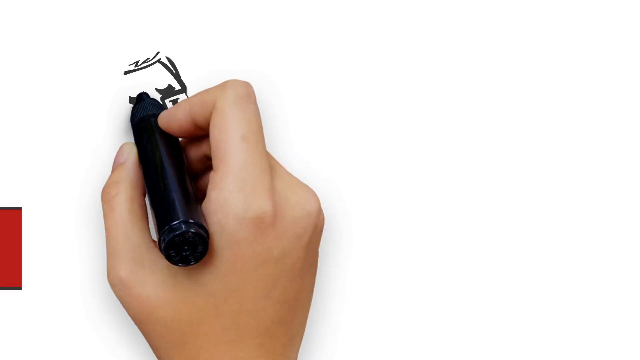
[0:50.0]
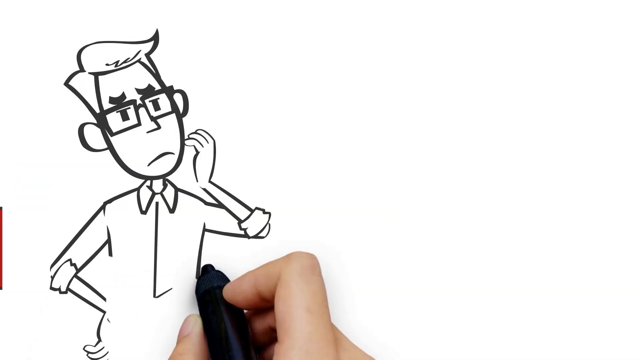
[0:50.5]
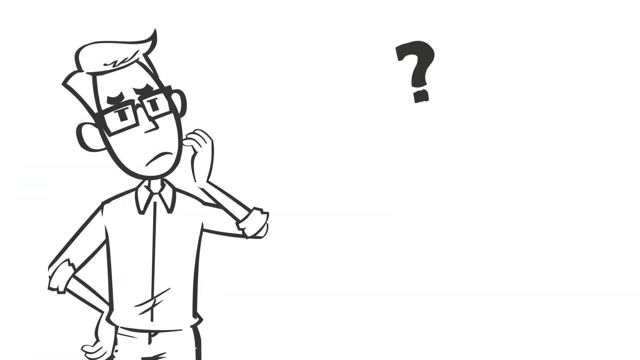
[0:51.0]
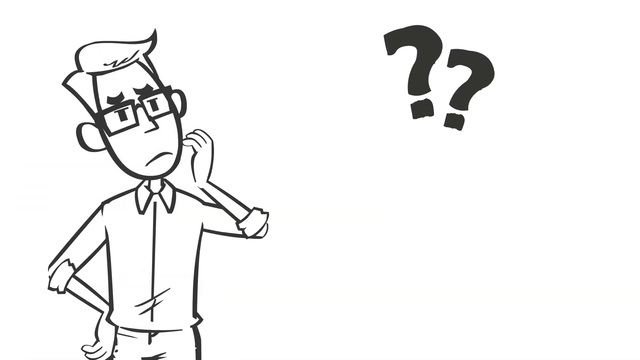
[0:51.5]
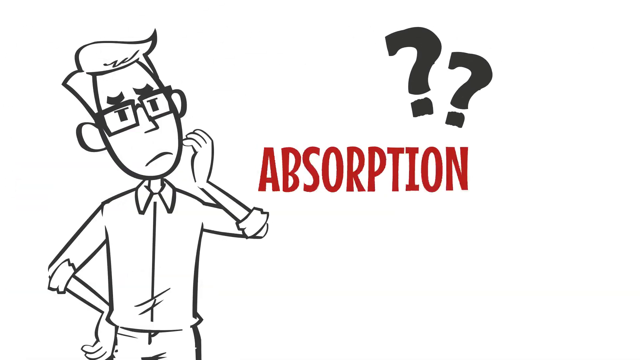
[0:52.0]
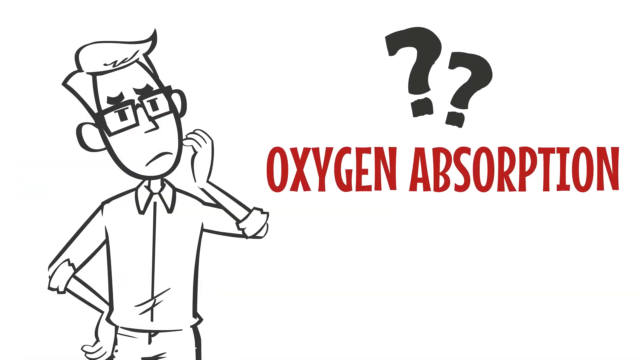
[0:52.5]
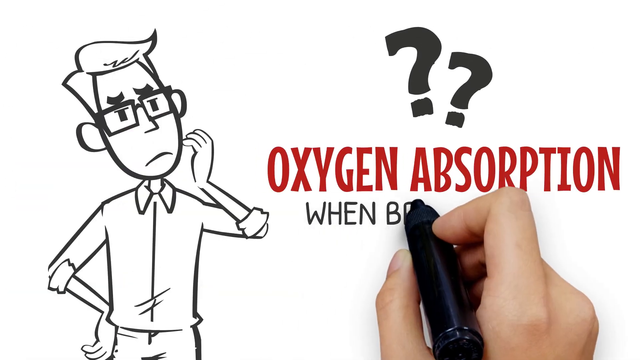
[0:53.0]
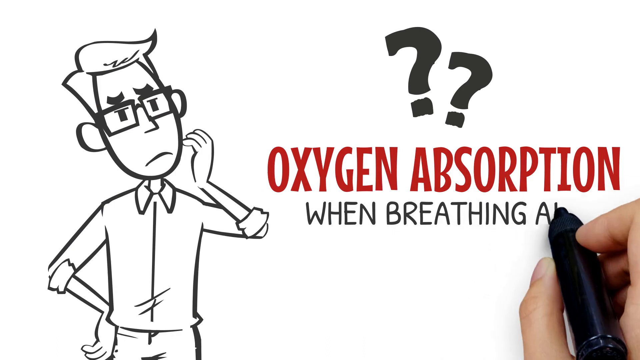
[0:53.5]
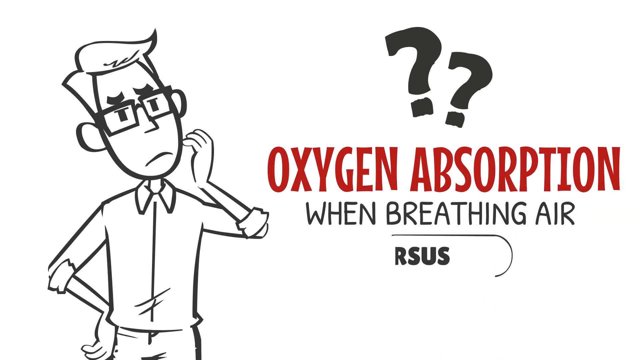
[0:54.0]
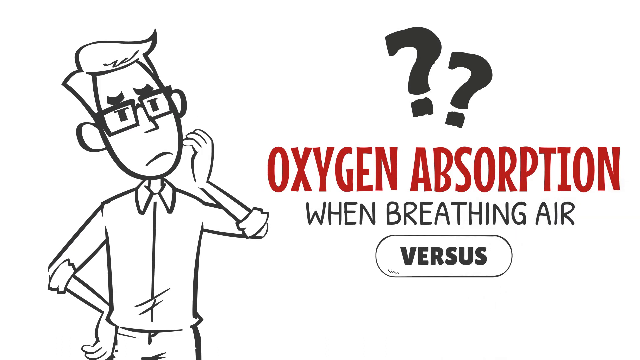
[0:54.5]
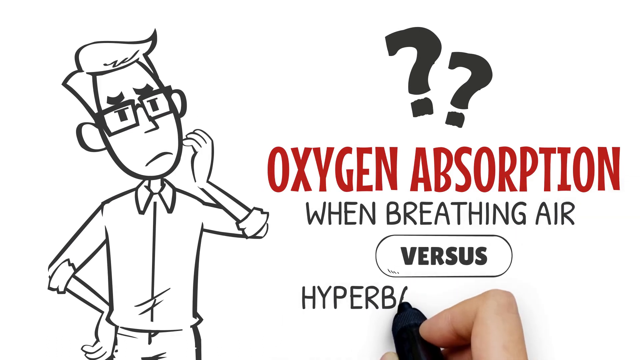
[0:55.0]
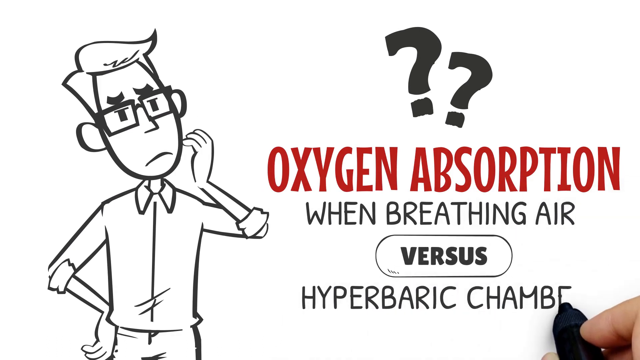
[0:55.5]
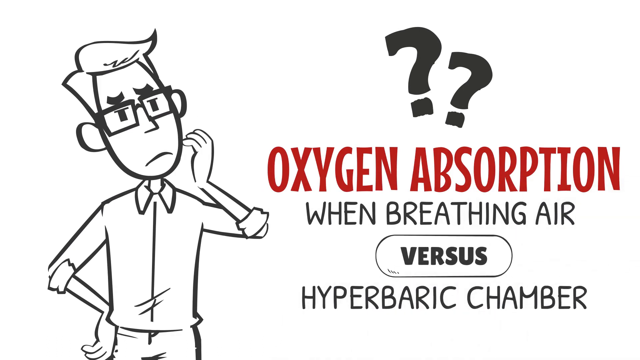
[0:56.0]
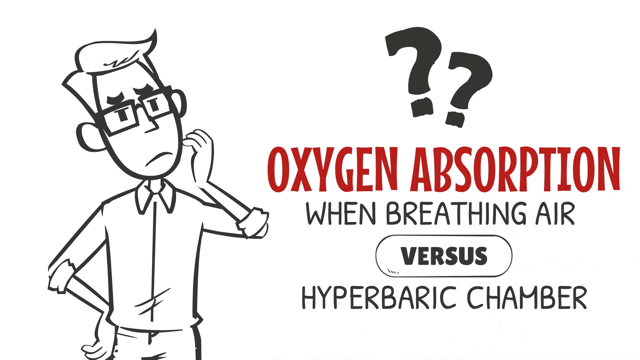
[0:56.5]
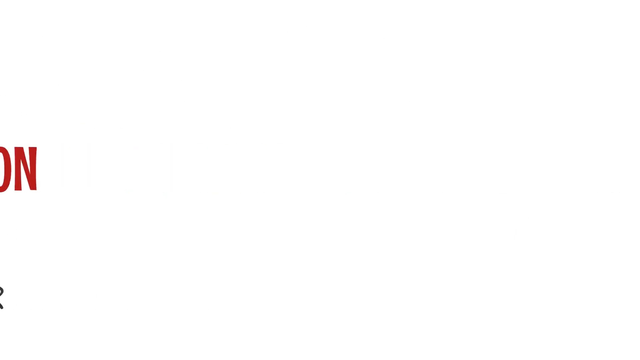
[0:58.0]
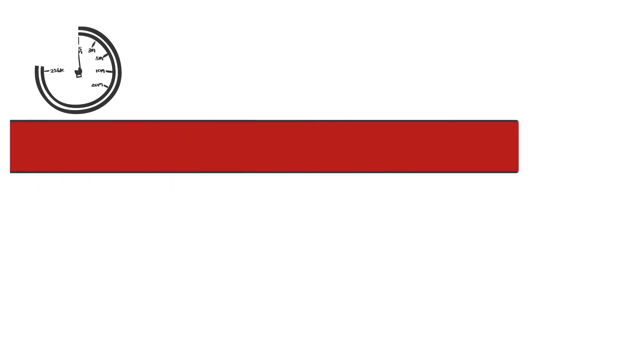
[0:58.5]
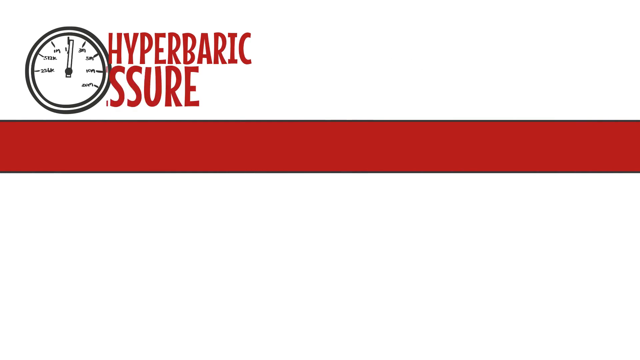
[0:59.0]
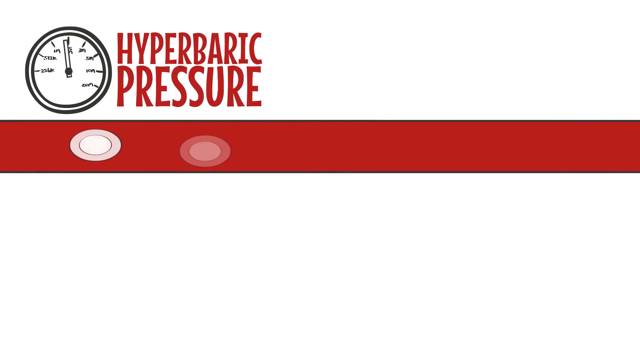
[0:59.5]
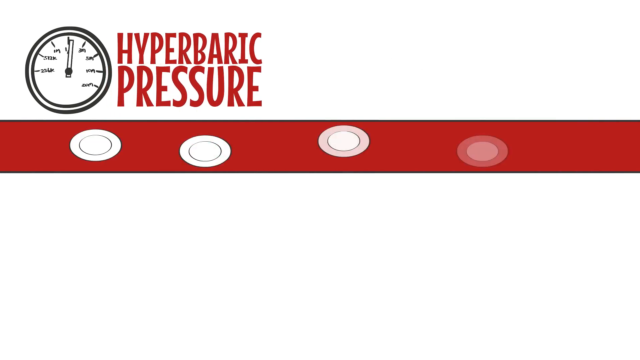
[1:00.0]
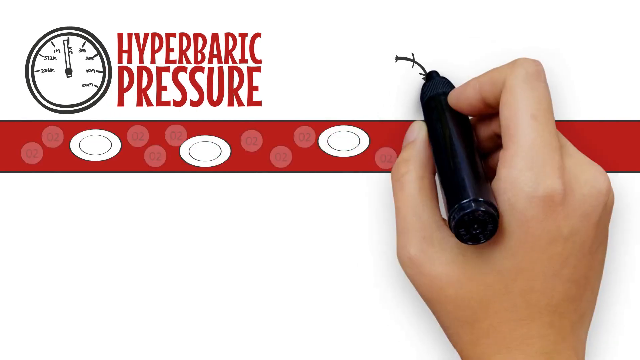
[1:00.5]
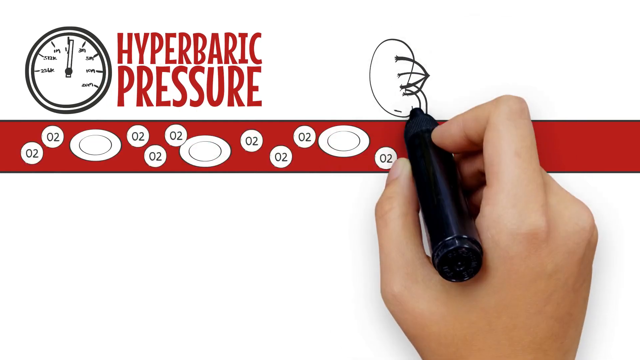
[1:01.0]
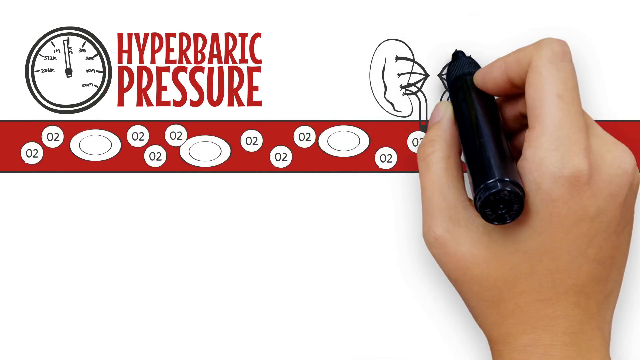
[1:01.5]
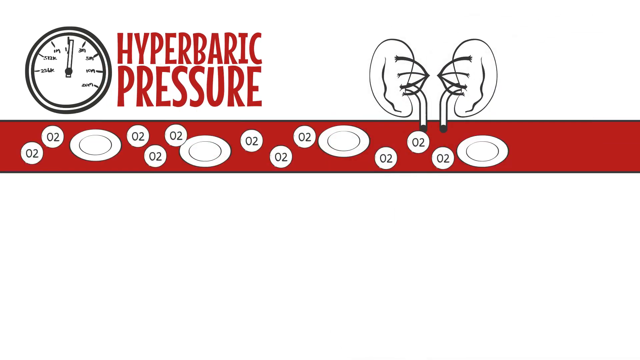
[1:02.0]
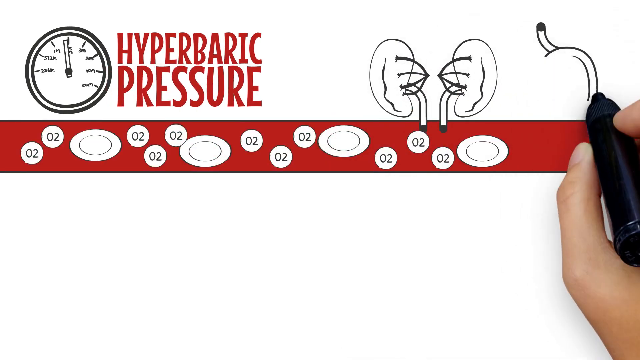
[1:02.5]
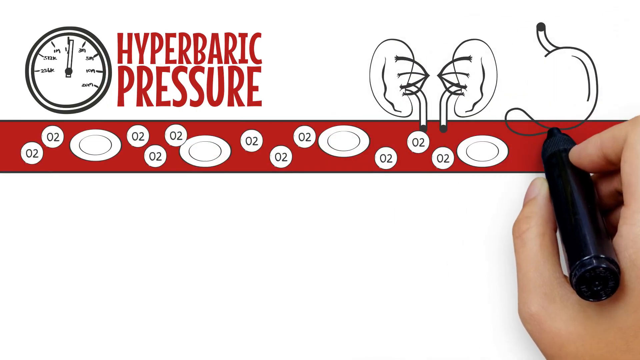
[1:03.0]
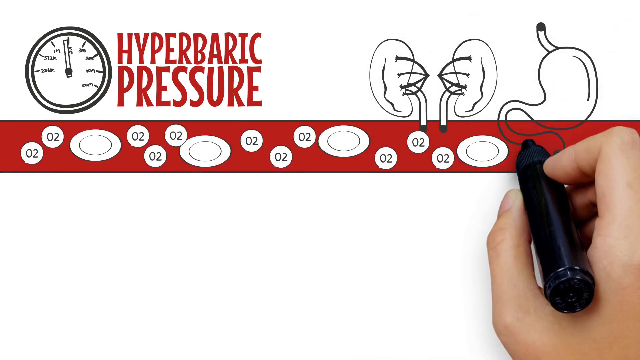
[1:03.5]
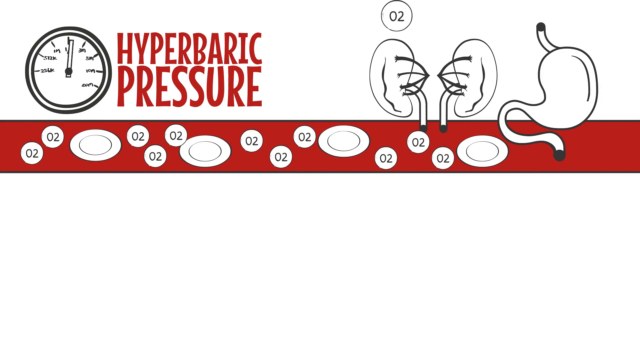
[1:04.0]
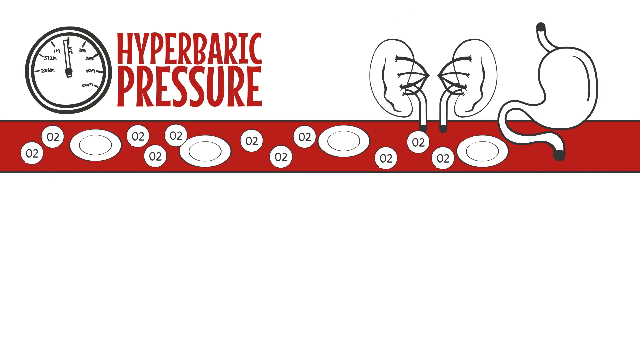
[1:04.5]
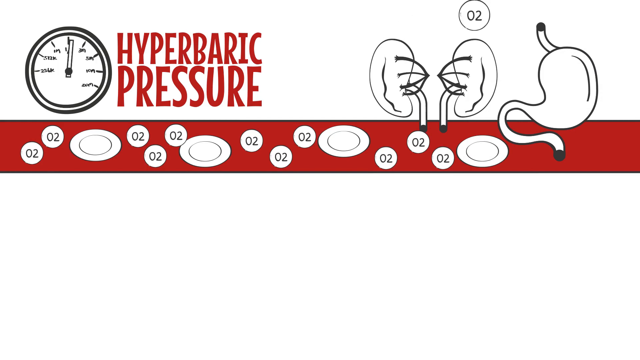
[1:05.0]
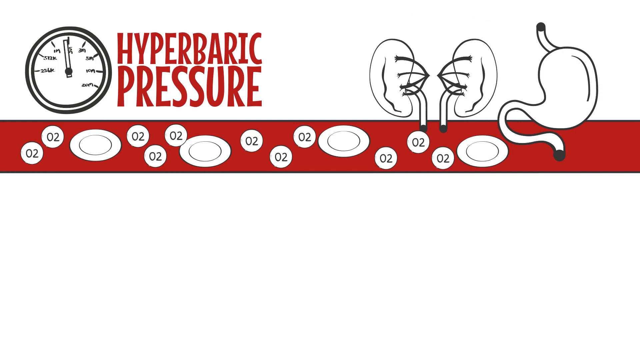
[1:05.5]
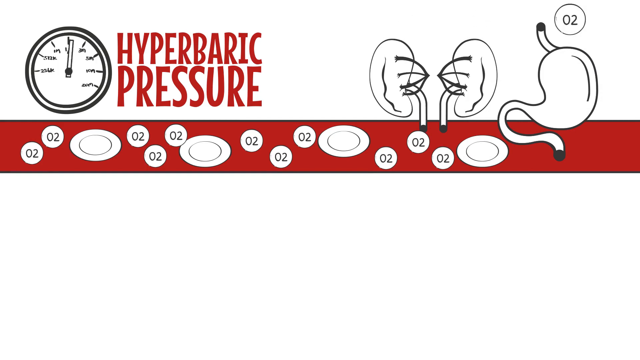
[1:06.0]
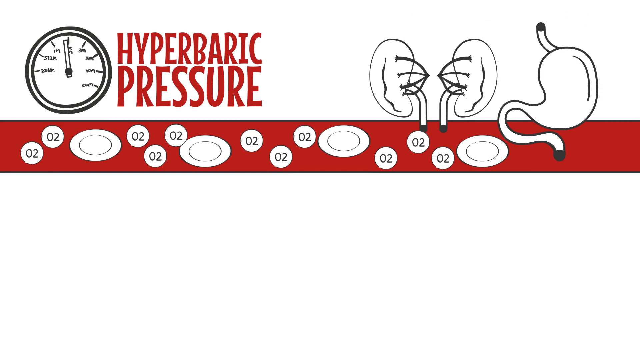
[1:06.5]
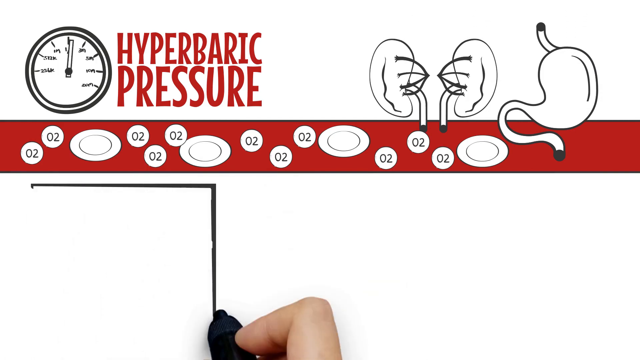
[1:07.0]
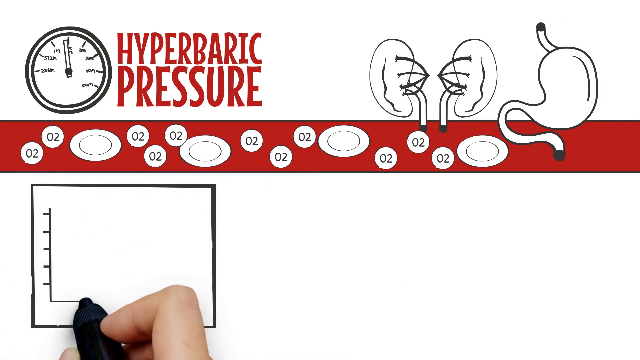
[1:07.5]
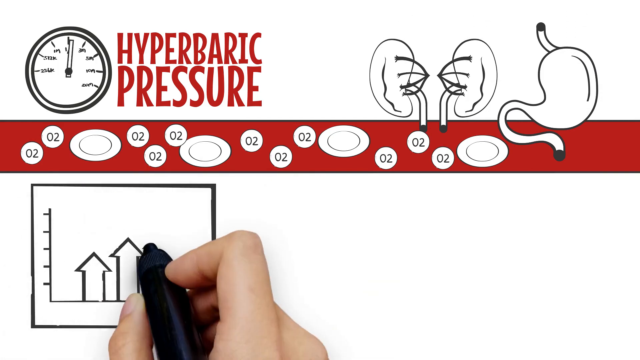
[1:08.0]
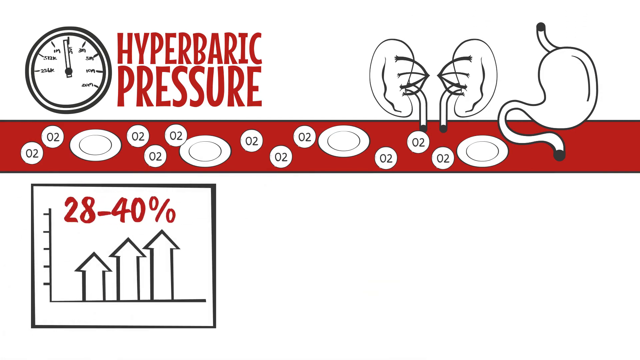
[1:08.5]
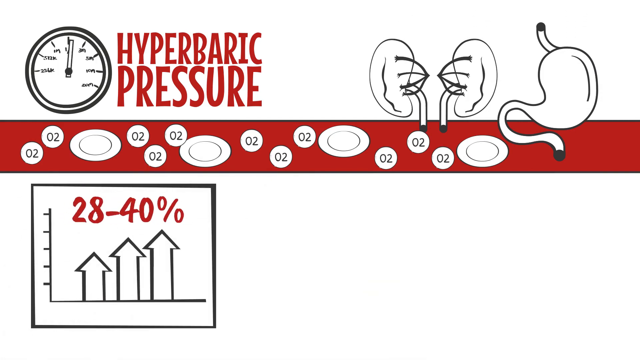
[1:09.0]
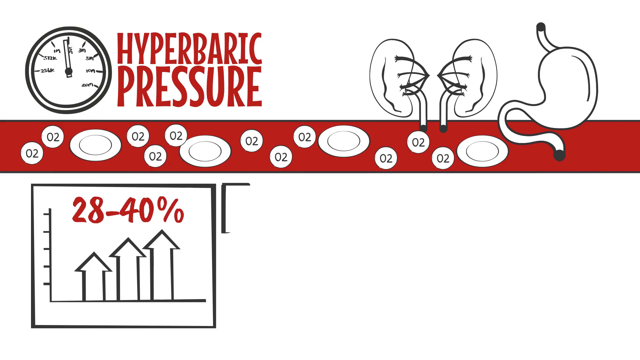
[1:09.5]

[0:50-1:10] A hand holding a black marker, closer to the left-hand side, appears to be drawing on a white piece of paper. It draws the patient wearing glasses with question marks to the right and the text "oxygen absorption when breathing air versus hyperbaric chamber," with "versus" circled. The next screen shows a scale in the top left corner while the hand moves back and forth. "Hyperbaric pressure" is written in red. A red strip moves along, and below it the red strip looks like it contains white blood cells and O2 in the bloodstream. The hand draws something that looks like lungs and something that looks like a stomach. It then draws a chart at the bottom showing 28% through 40%.